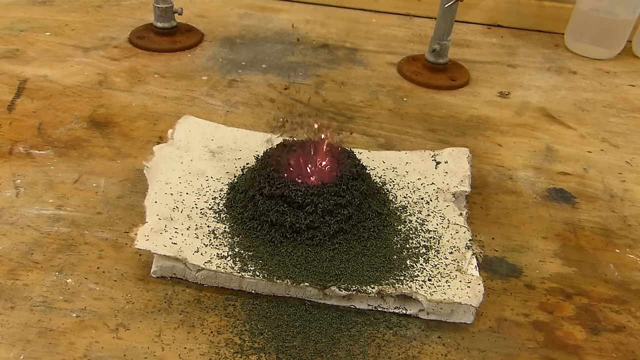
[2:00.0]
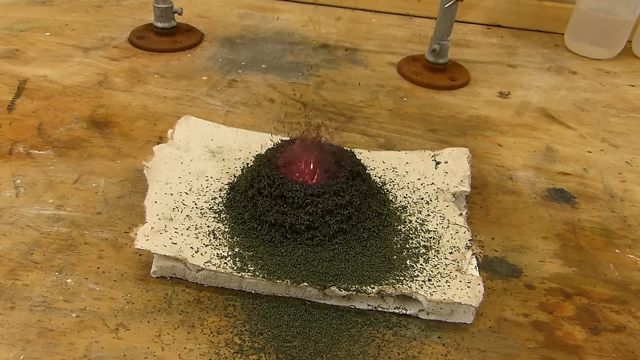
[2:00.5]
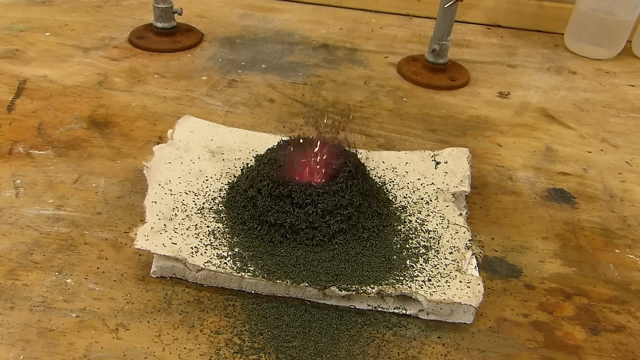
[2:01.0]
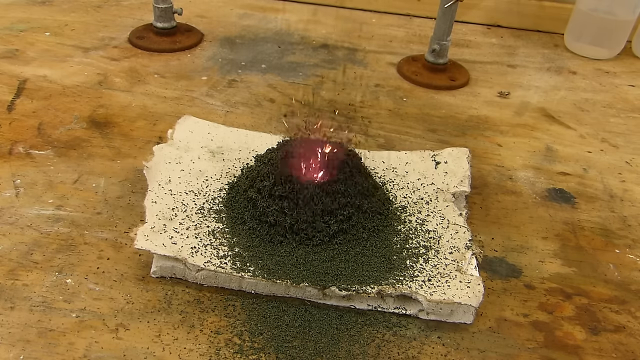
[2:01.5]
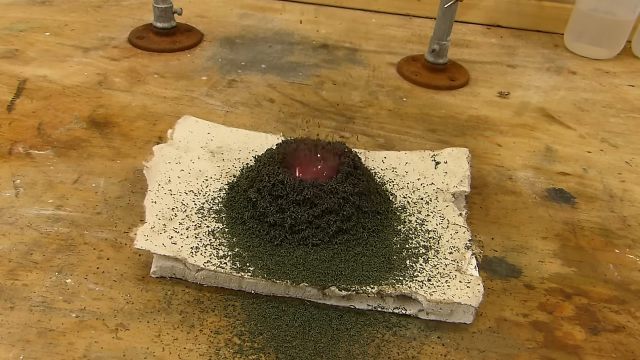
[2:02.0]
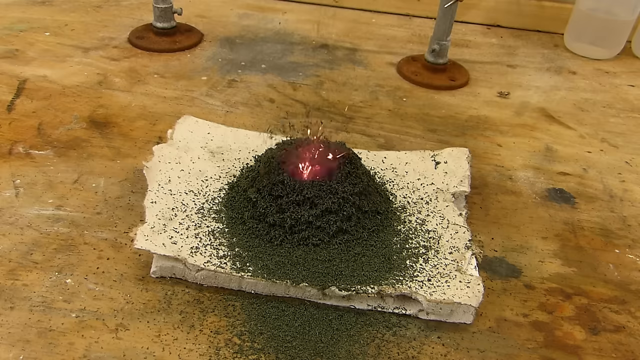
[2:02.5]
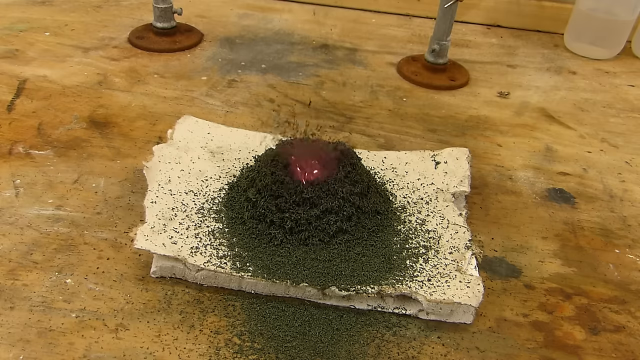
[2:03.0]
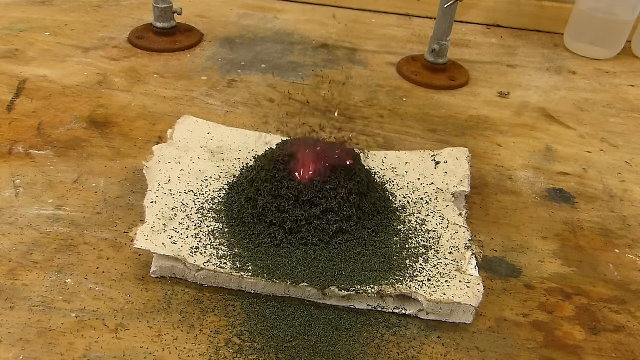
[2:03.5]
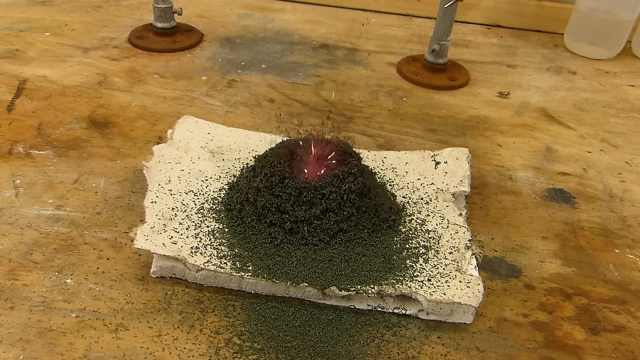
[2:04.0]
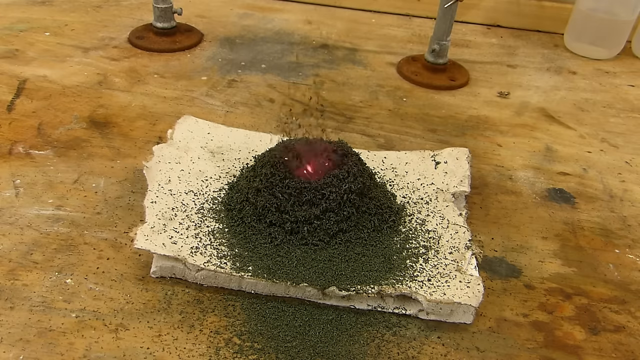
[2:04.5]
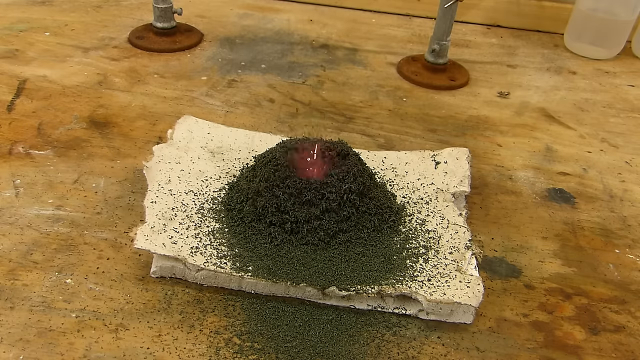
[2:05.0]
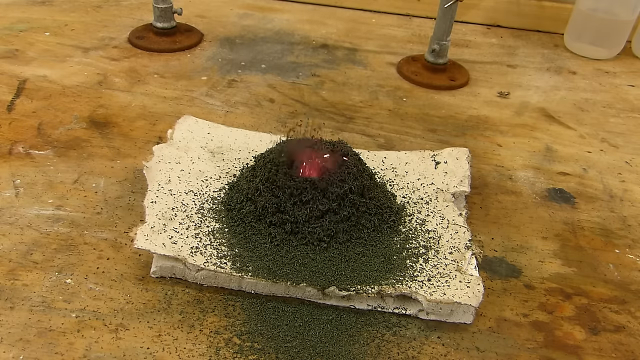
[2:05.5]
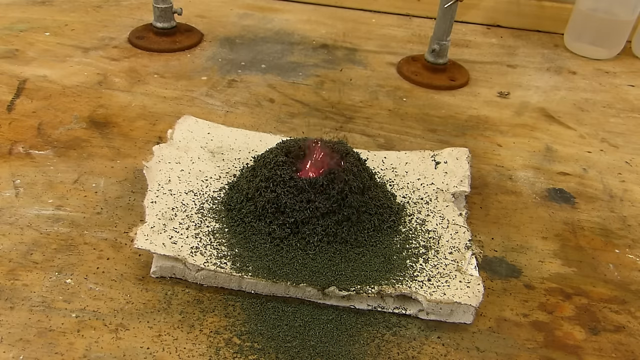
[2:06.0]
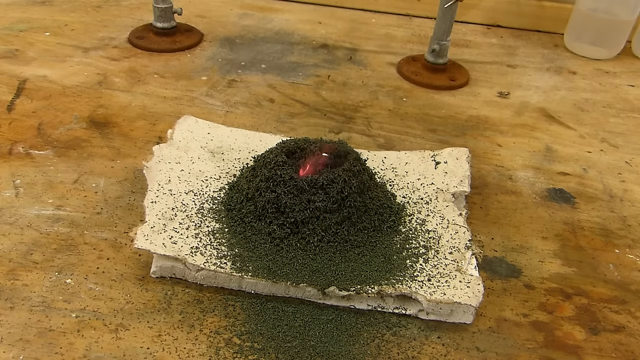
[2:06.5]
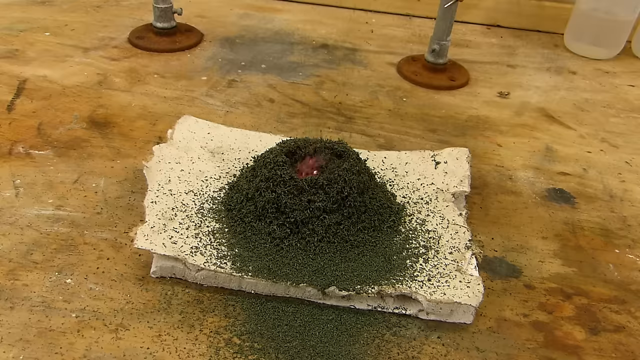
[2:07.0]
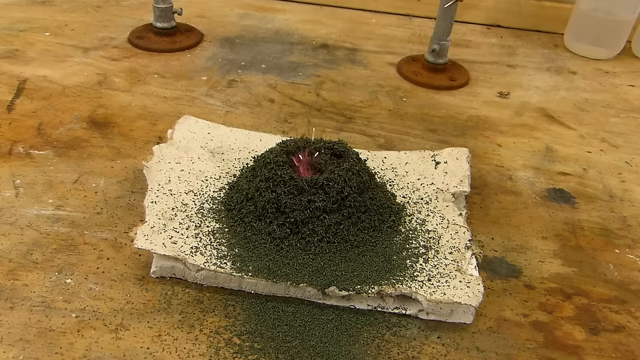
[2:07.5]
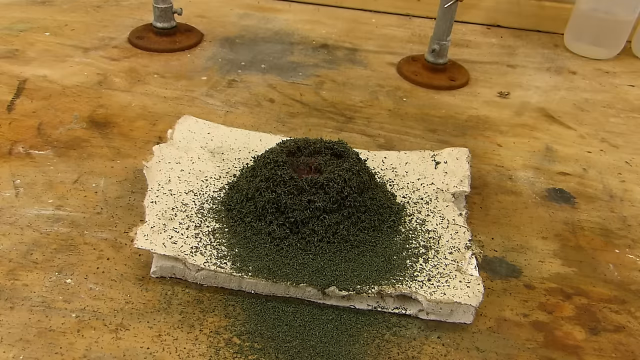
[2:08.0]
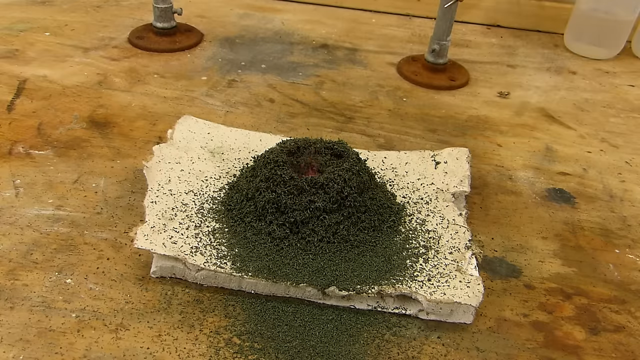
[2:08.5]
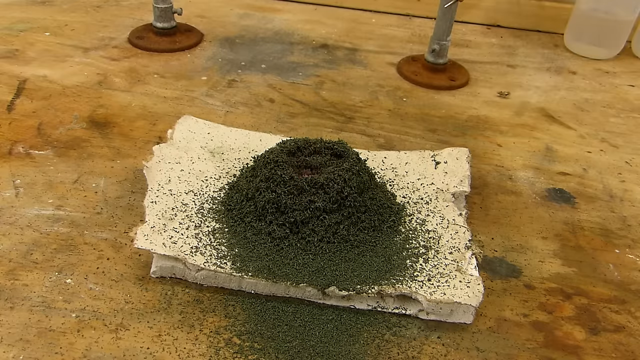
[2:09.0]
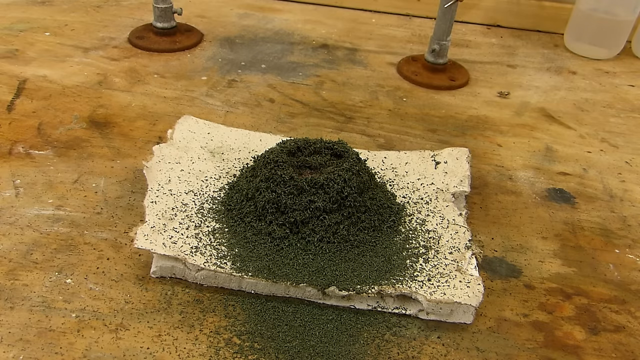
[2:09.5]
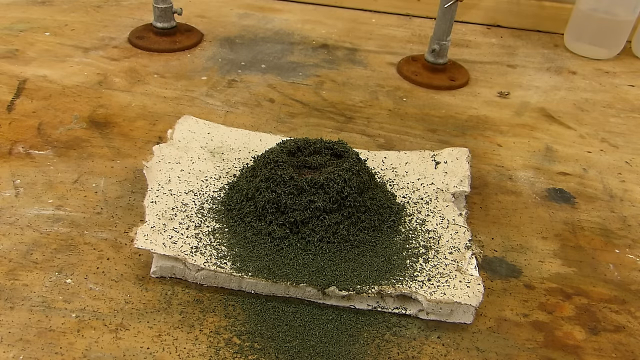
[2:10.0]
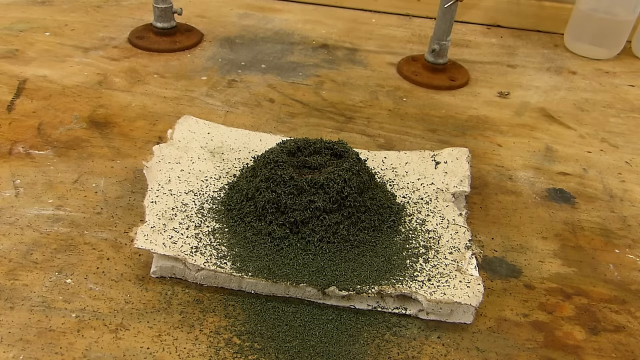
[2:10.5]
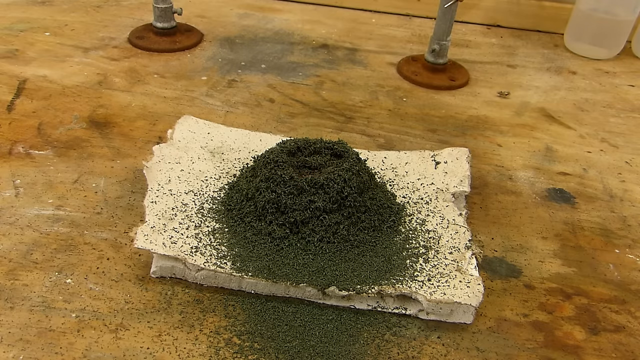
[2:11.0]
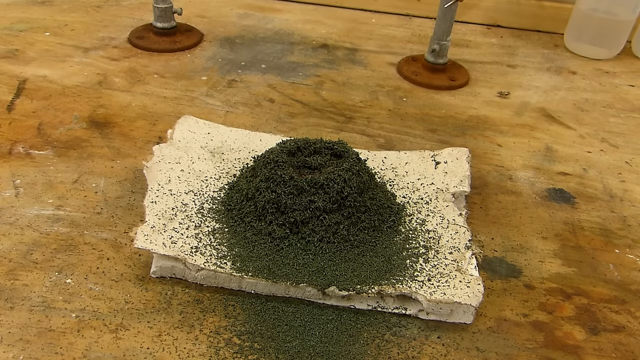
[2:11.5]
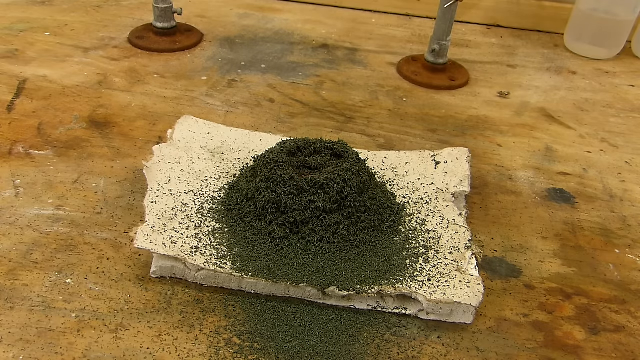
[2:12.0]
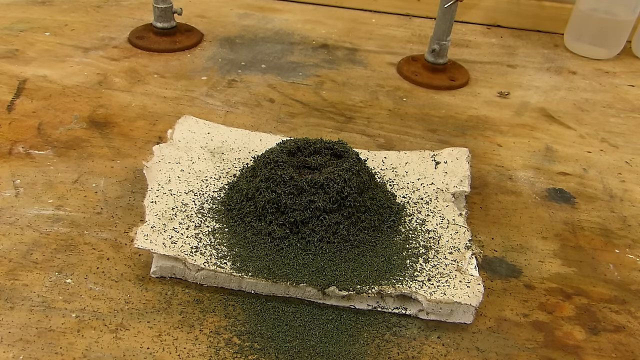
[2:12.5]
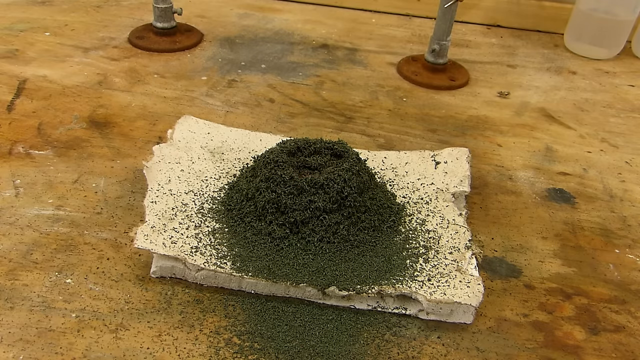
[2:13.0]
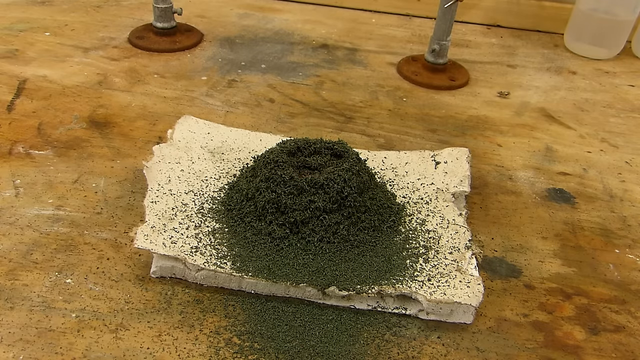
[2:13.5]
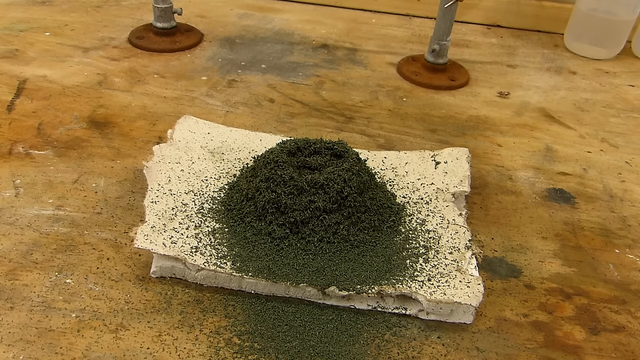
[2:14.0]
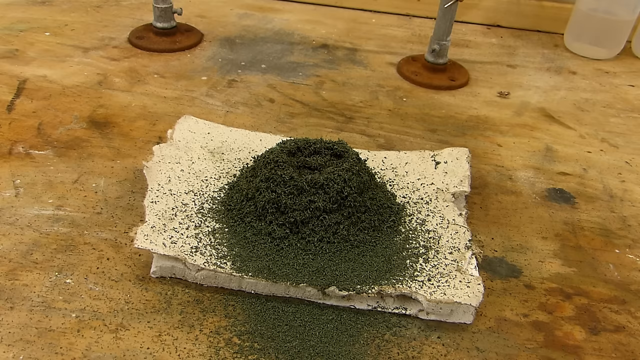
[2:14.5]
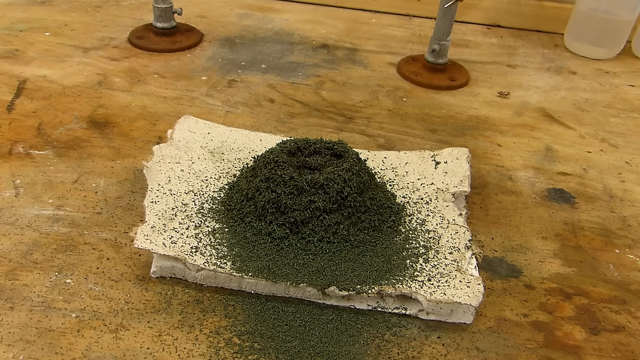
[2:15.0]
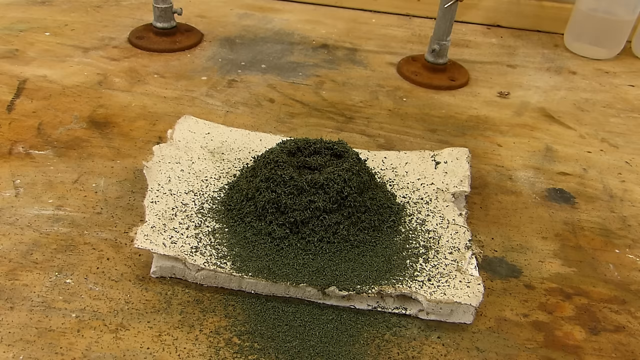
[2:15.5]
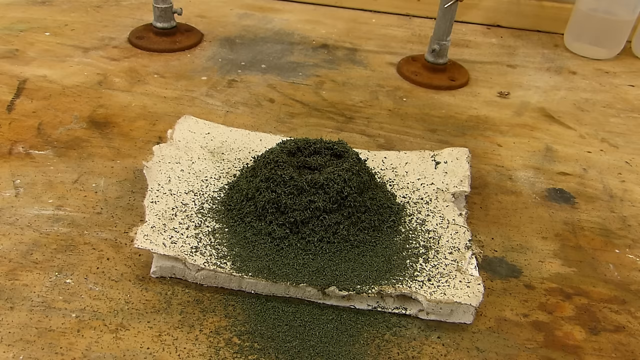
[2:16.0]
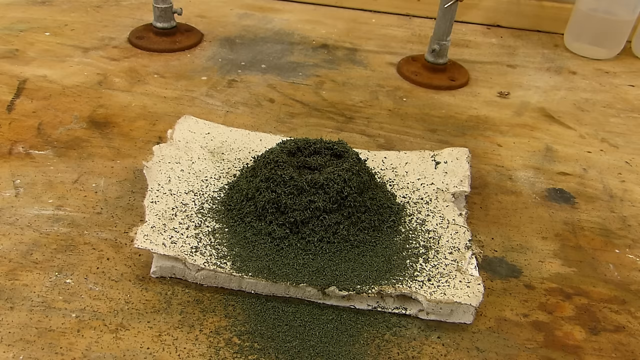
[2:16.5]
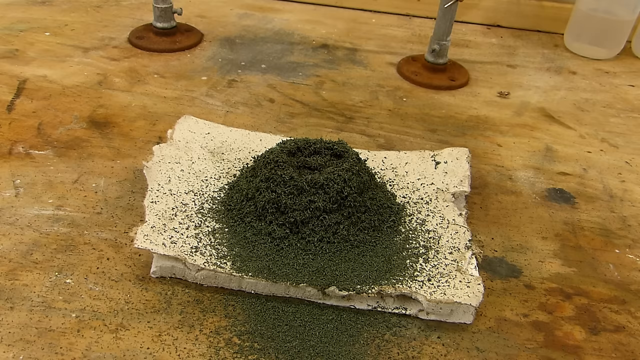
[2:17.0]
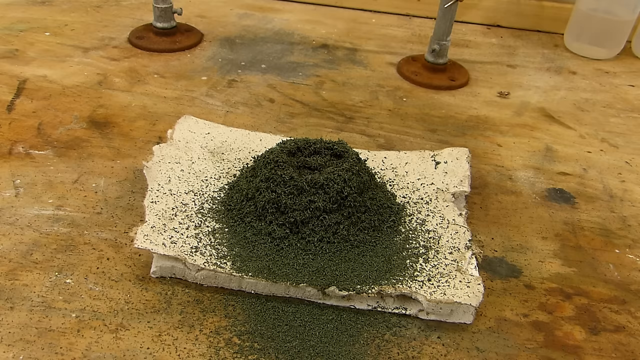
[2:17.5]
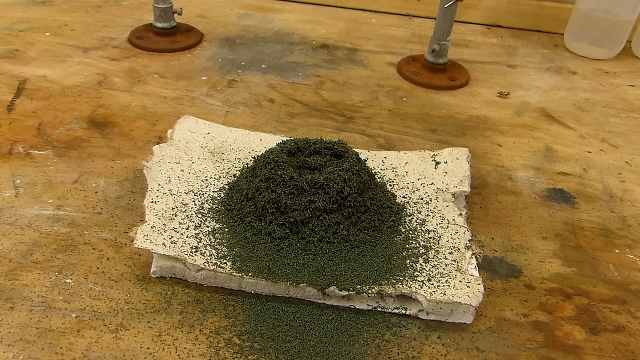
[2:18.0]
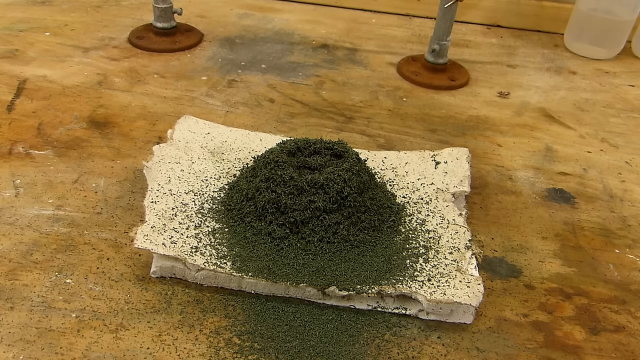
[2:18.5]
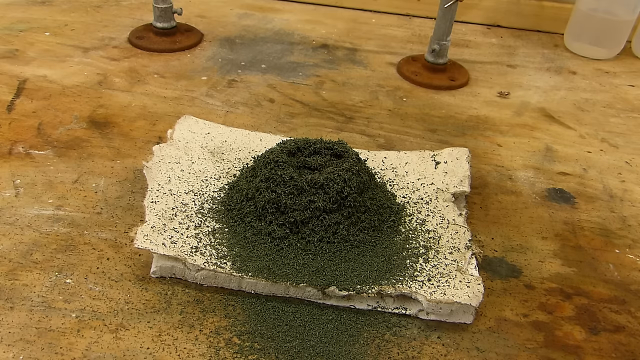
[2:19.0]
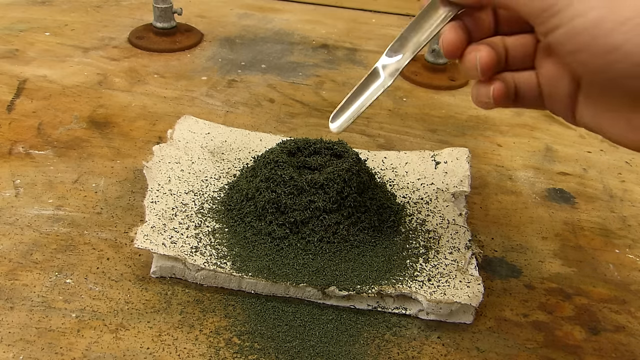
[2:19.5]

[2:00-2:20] The pile is almost entirely black, but the sparks are still going, flying in the air like little sprinkled confetti or little metallic sprinkle pieces. The reaction then dies down as everything has turned from orange to black. His right hand comes back holding something metal, maybe a metal scooper, with only the tip and a little above it visible.